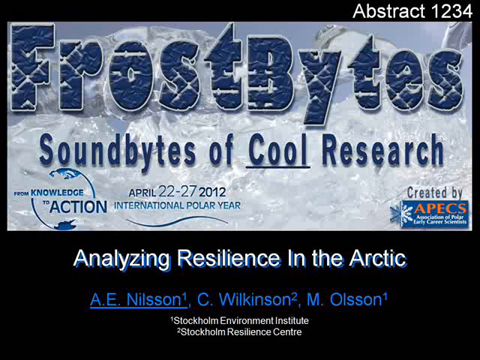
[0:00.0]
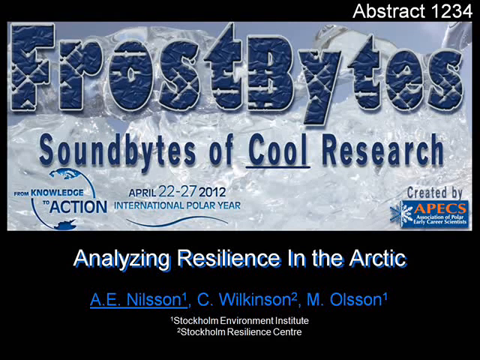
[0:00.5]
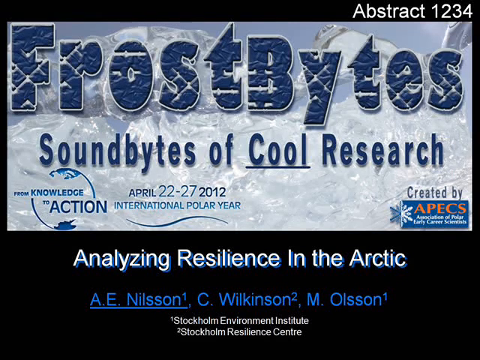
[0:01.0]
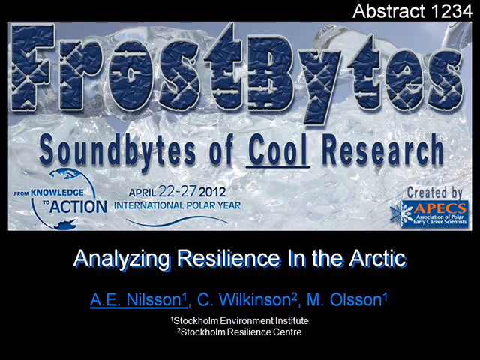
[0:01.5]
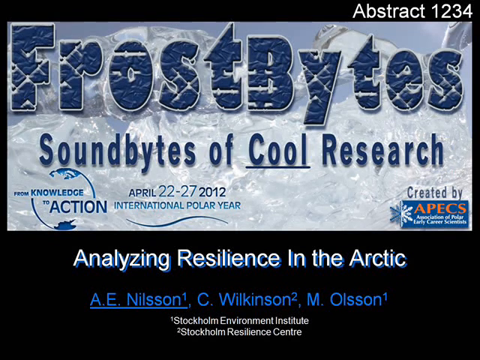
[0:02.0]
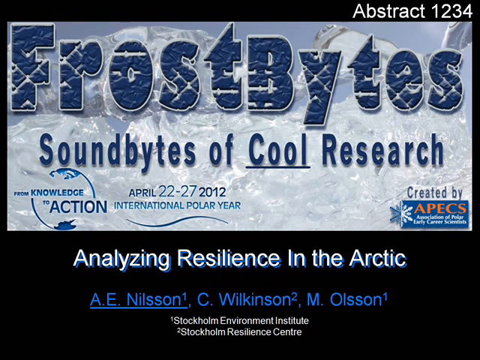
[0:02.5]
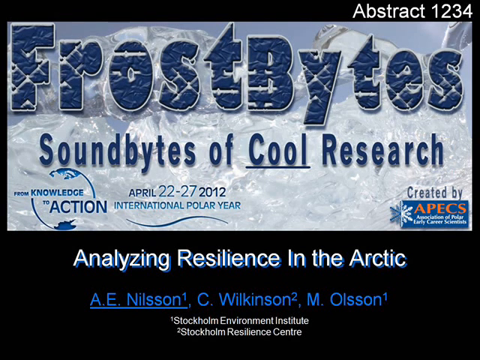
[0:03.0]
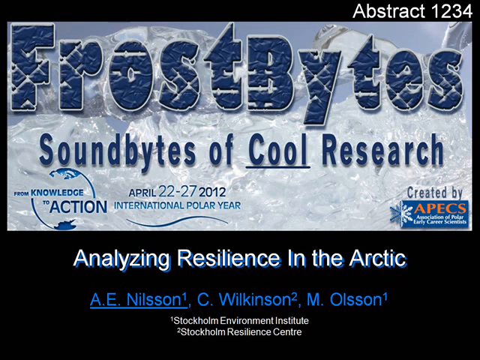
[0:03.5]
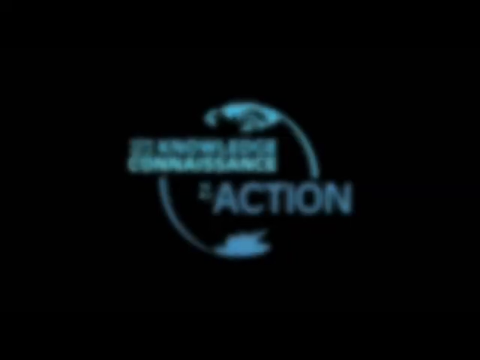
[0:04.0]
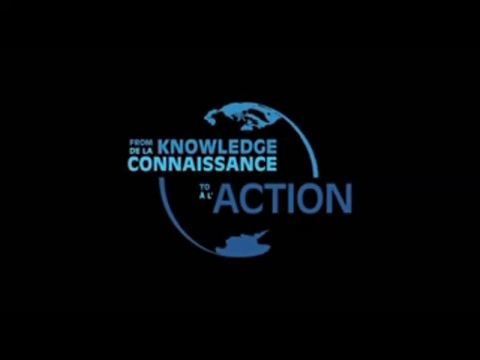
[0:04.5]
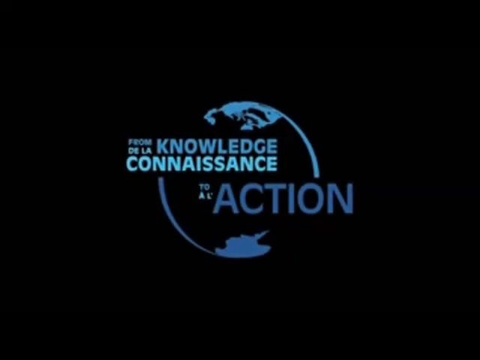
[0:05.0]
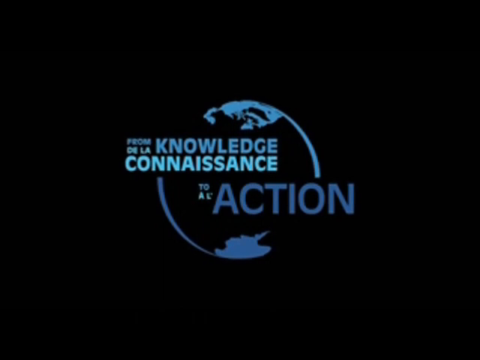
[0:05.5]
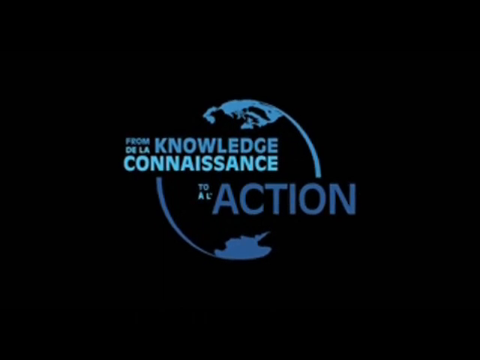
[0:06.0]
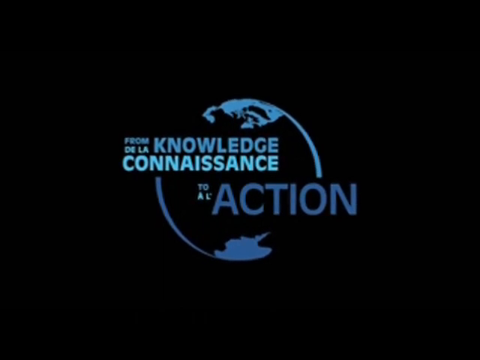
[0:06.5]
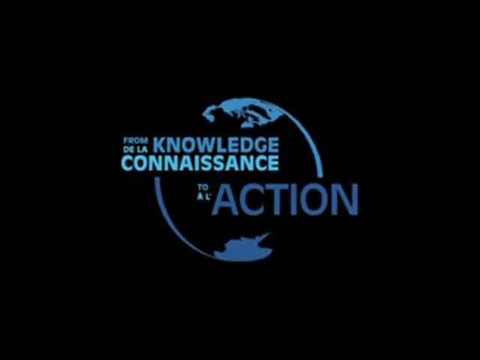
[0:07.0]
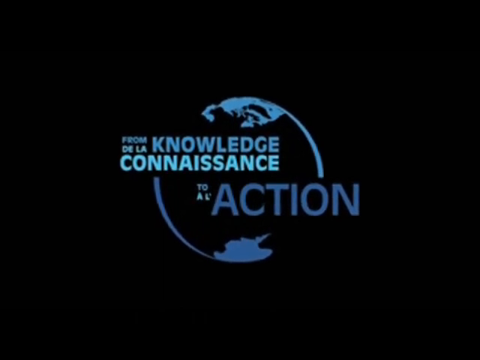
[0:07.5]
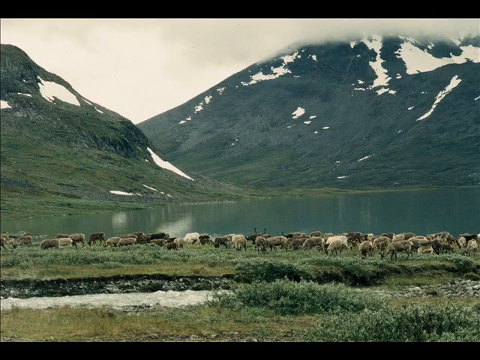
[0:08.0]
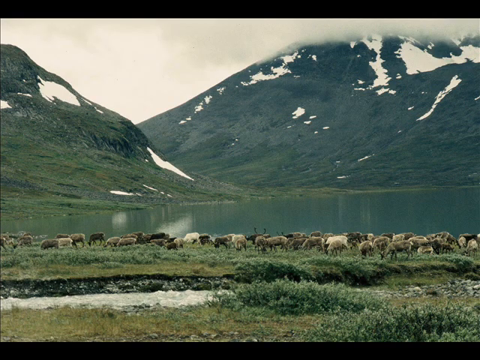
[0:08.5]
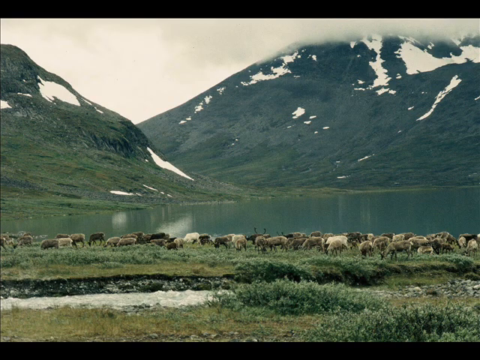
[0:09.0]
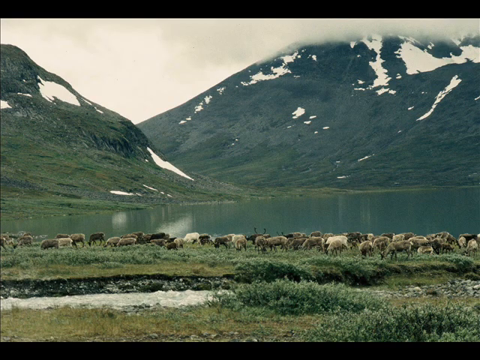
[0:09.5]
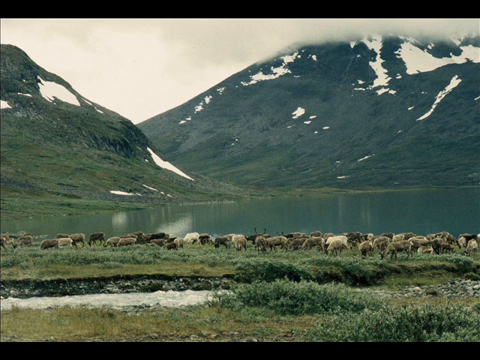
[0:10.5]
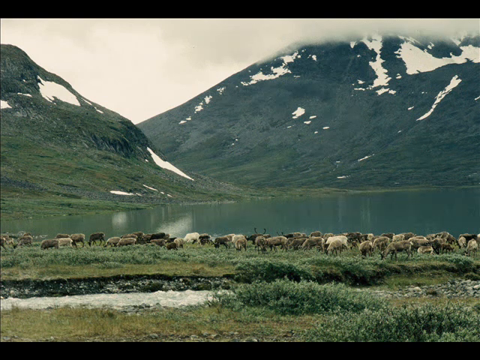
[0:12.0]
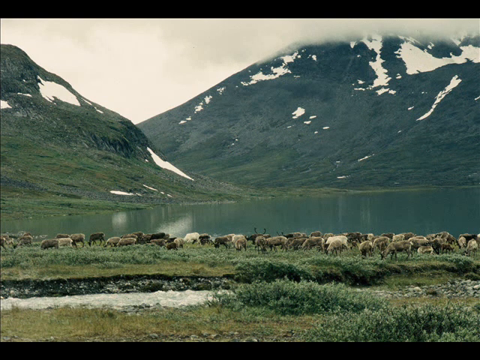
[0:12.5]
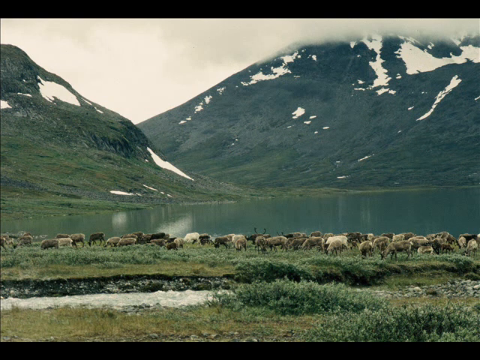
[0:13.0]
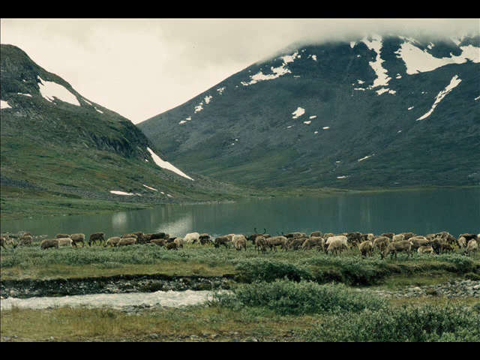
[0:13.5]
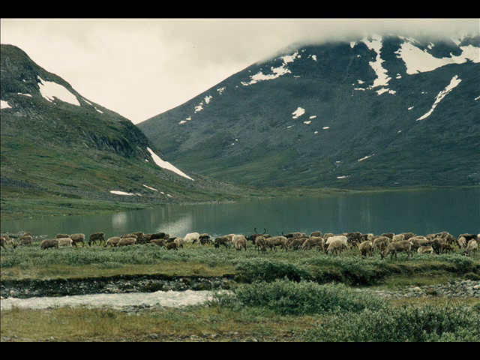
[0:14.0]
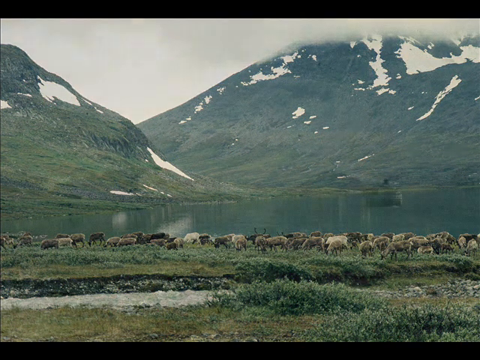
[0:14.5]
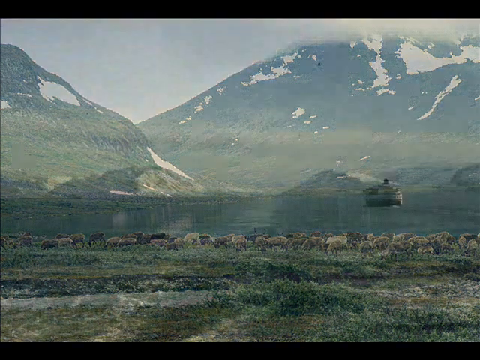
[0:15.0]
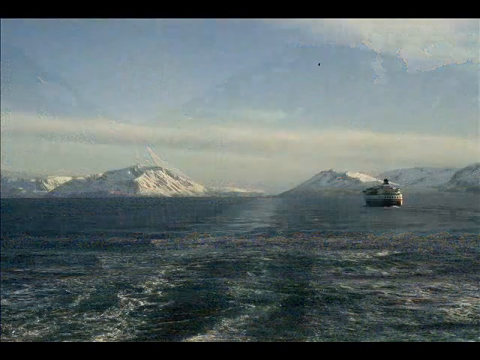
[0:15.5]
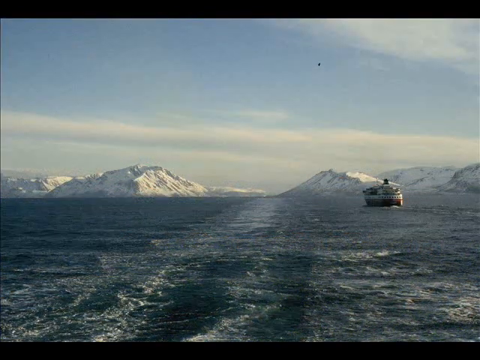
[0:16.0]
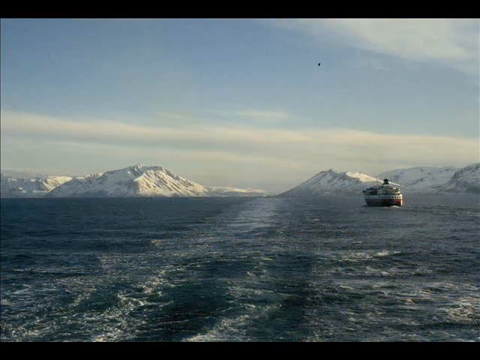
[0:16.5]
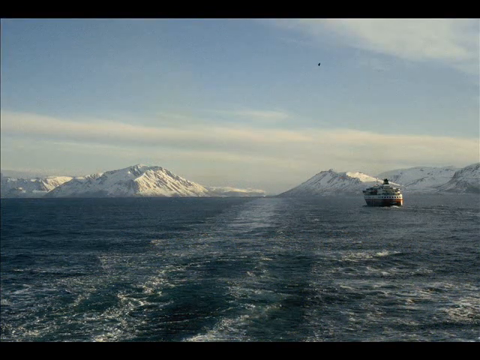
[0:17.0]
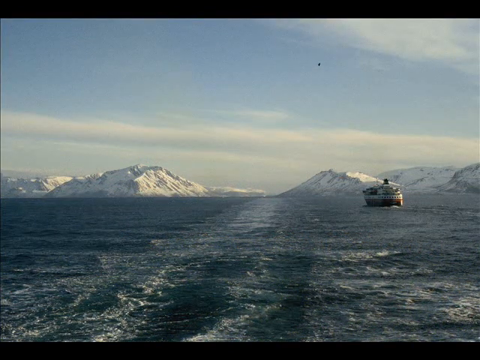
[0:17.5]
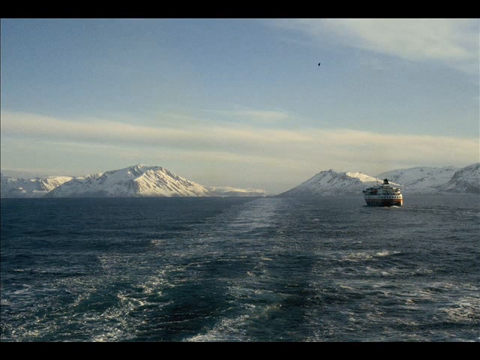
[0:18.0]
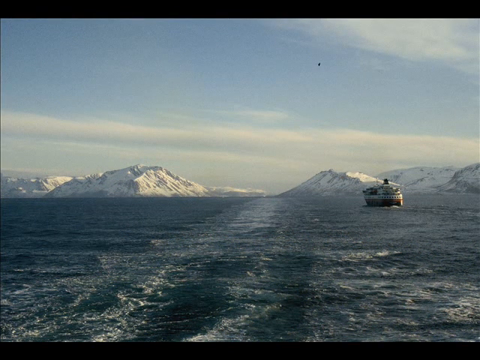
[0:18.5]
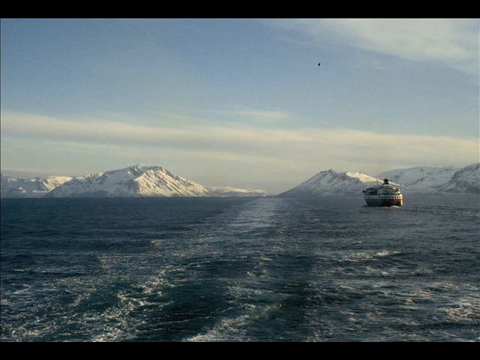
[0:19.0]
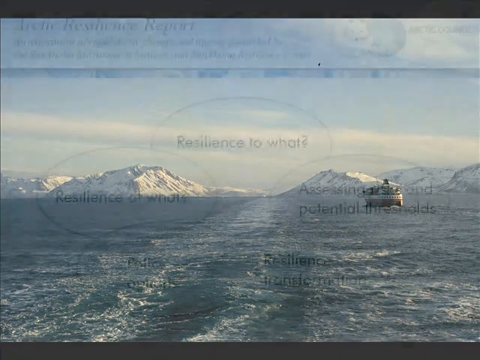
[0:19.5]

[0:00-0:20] A slide reads "FrostBytes, soundbites of cool research, April 22nd, to 27th, 2012, International Polar Year Analyzing Resilience in the Arctic." It lists the authors A.E. Nielsen, C. Wilkinson and M. Olsen, names the Stockholm Environment Institute and Stockholm Resilience Centre, and gives the address www.stockholmresilience.org. The next slide has text ending "to action" and a blue logo with a blue outline. Next comes a shot of a fountain with a lake in the middle and a lot of animals in the foreground, followed by a shot of a large ship in the background on the sea with fountains in the background. The video seems to present some kind of research paper, apparently researching polar or ice-related topics, with various slides and scenes of mountains with ice on them in the background.